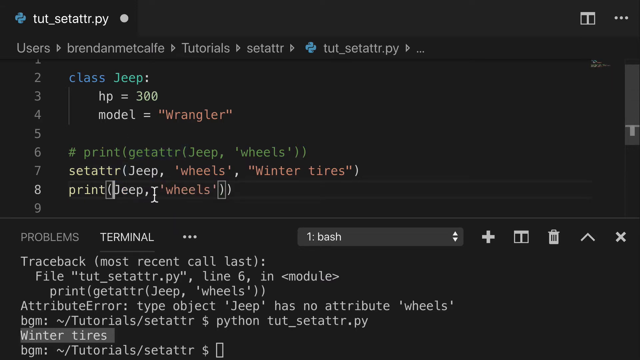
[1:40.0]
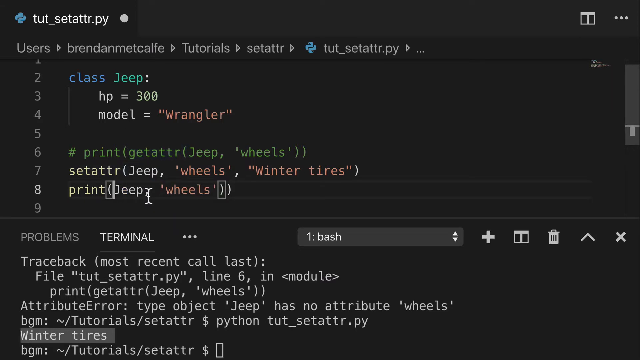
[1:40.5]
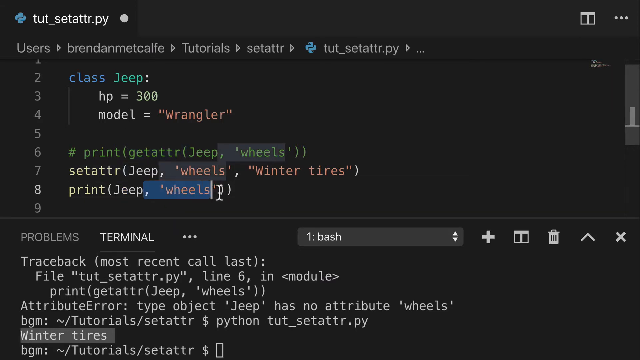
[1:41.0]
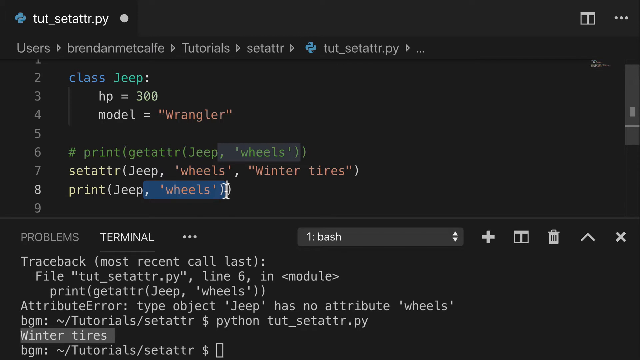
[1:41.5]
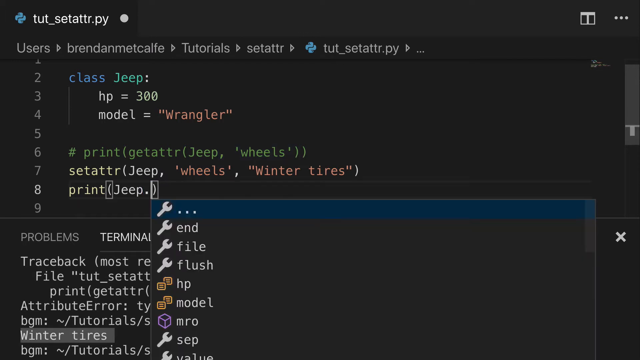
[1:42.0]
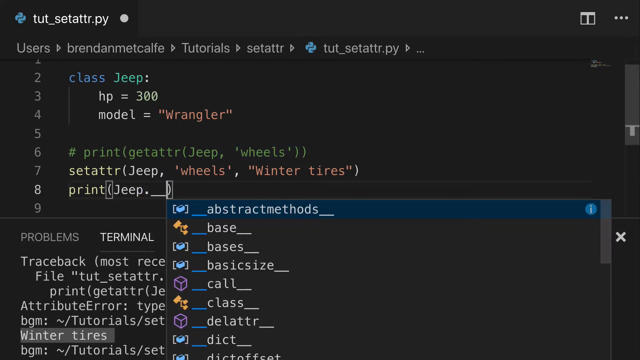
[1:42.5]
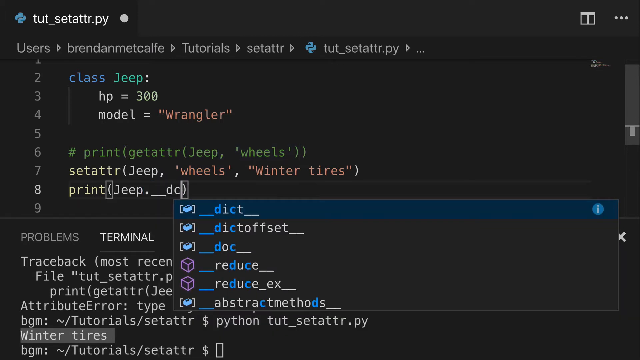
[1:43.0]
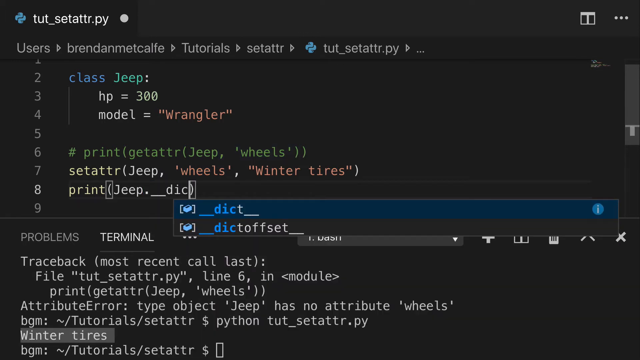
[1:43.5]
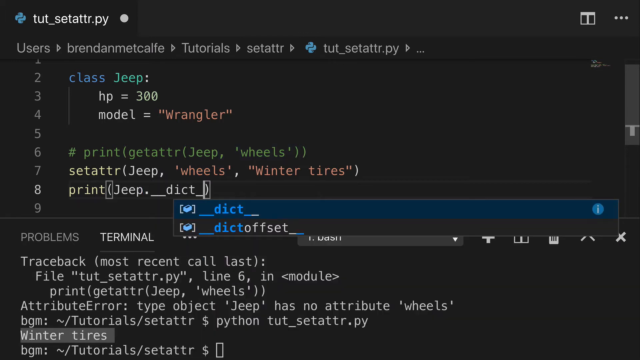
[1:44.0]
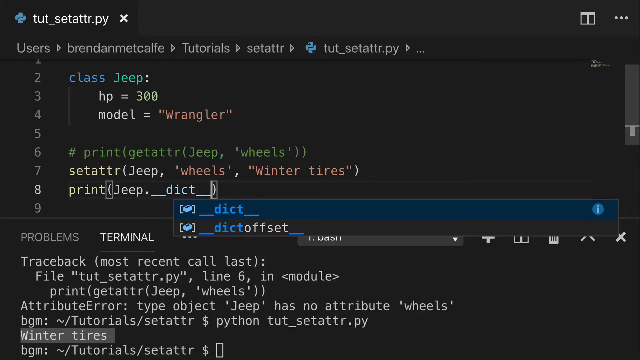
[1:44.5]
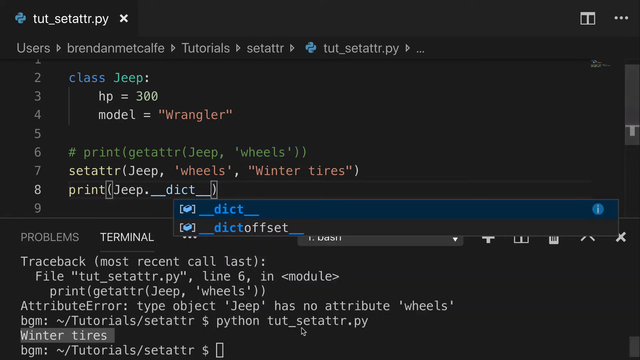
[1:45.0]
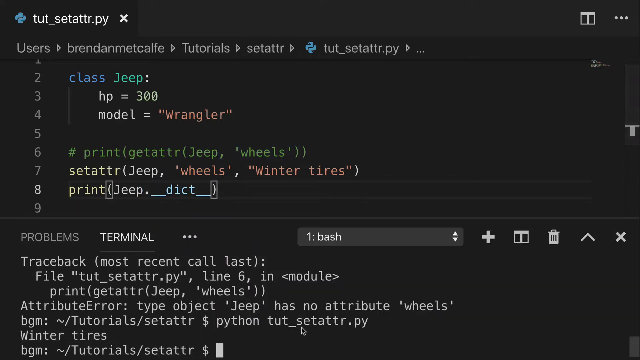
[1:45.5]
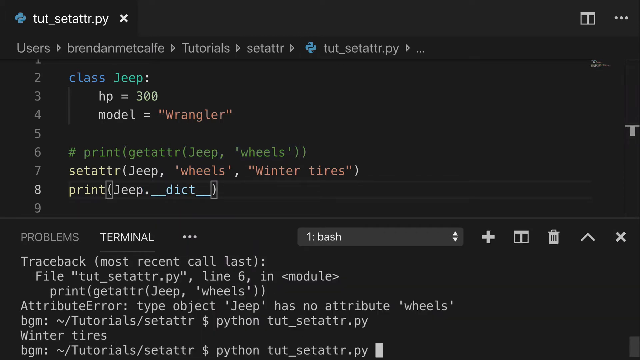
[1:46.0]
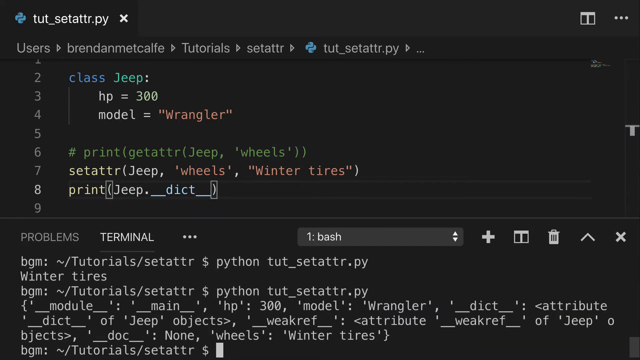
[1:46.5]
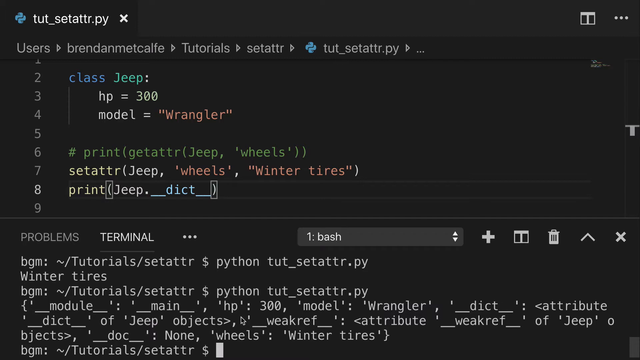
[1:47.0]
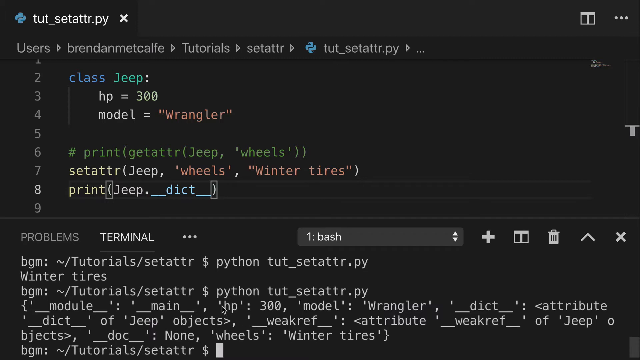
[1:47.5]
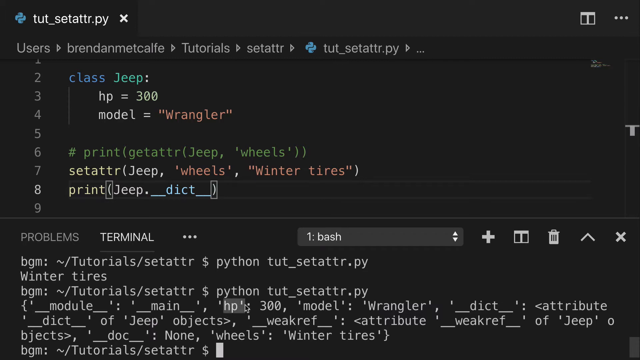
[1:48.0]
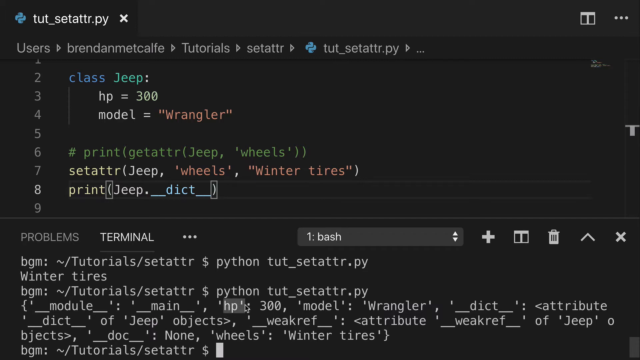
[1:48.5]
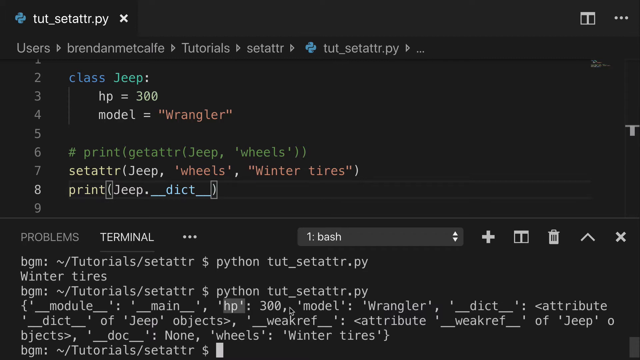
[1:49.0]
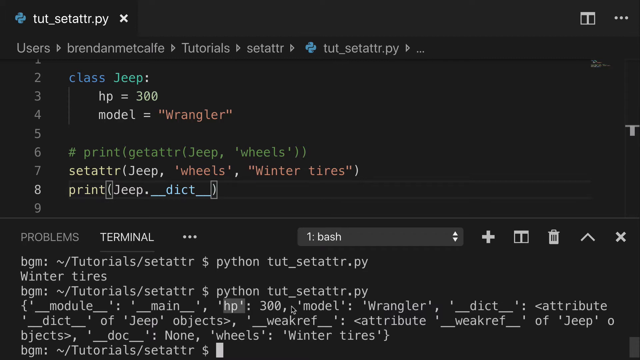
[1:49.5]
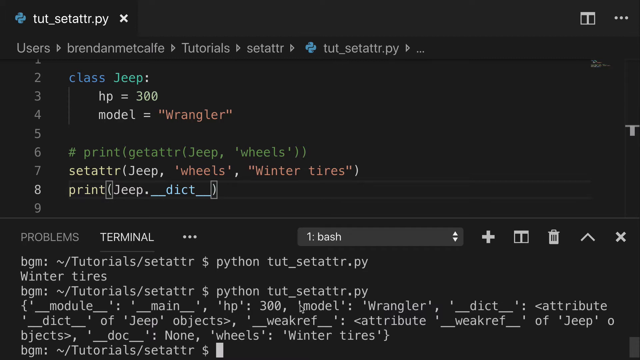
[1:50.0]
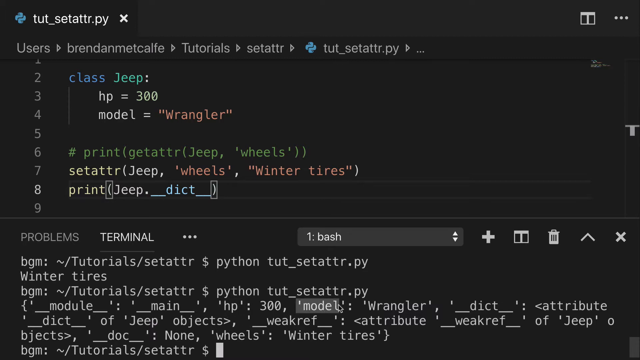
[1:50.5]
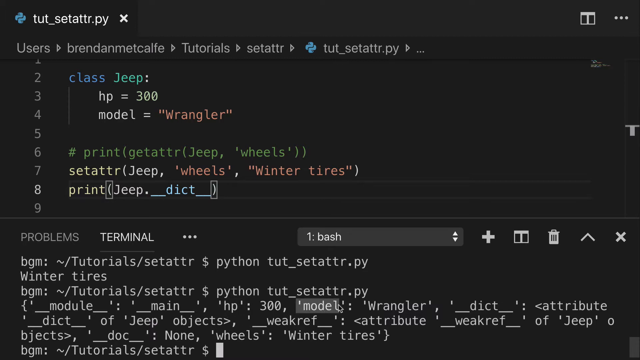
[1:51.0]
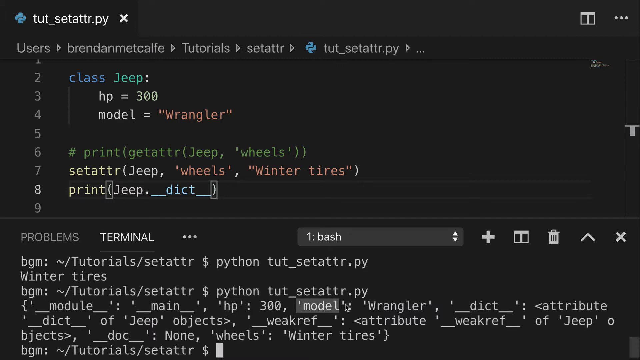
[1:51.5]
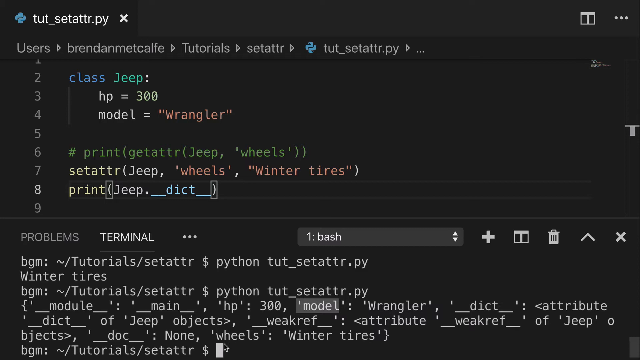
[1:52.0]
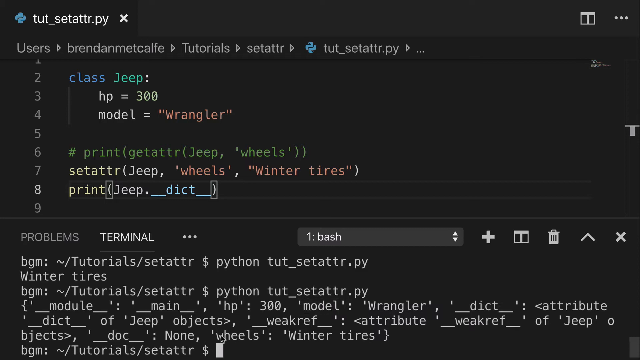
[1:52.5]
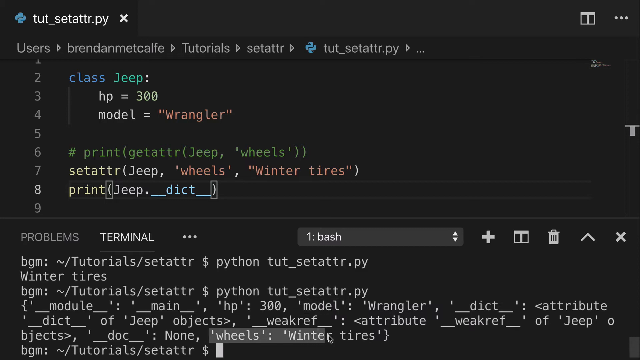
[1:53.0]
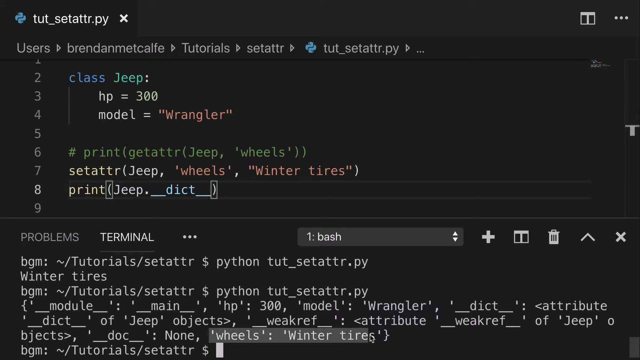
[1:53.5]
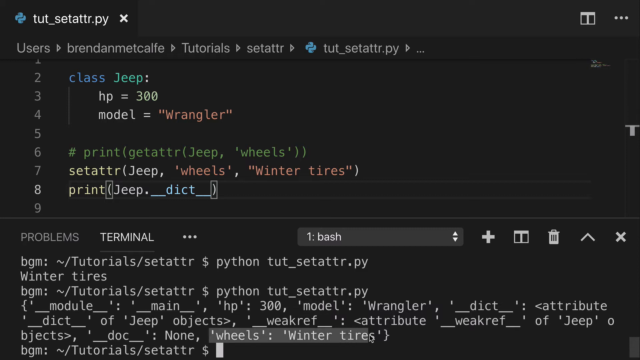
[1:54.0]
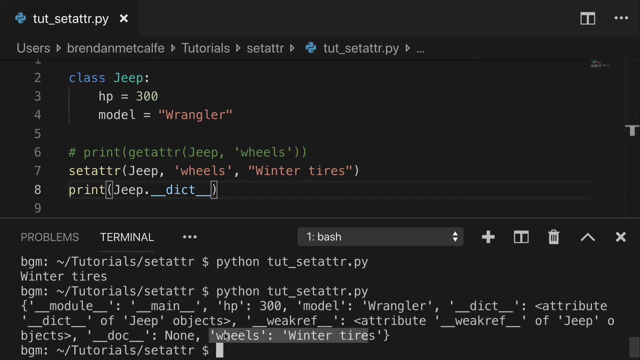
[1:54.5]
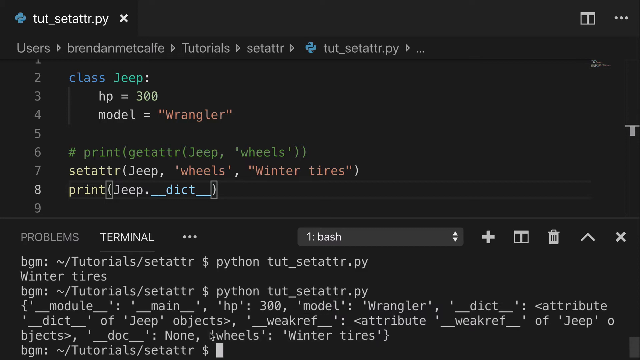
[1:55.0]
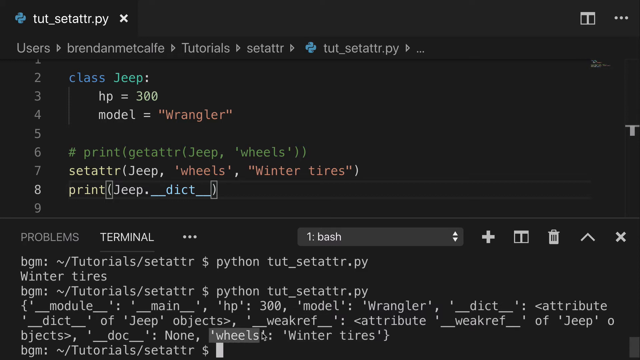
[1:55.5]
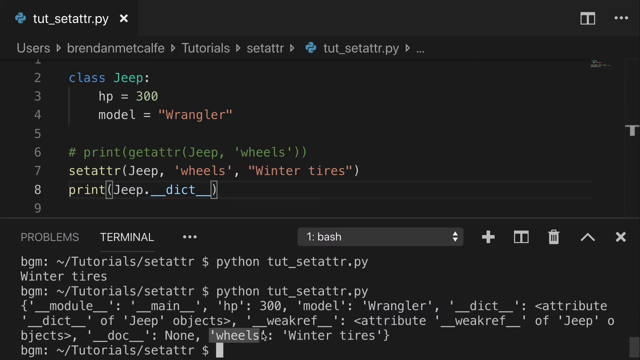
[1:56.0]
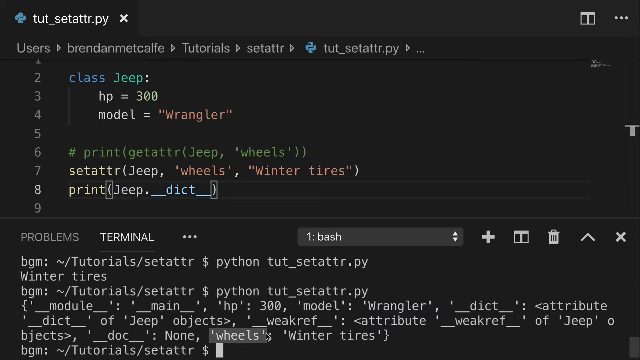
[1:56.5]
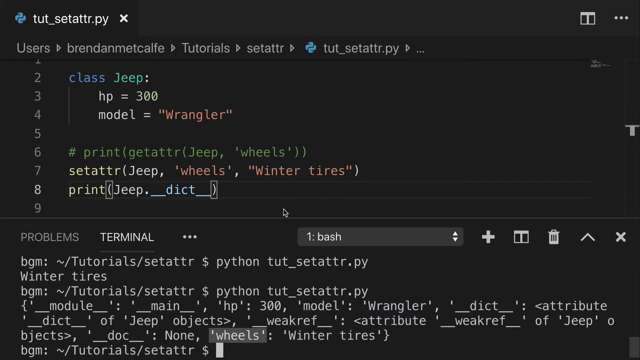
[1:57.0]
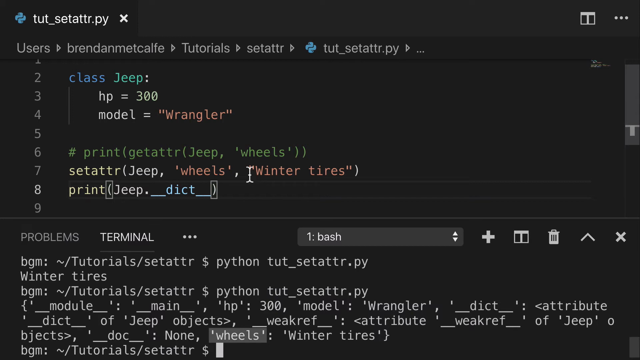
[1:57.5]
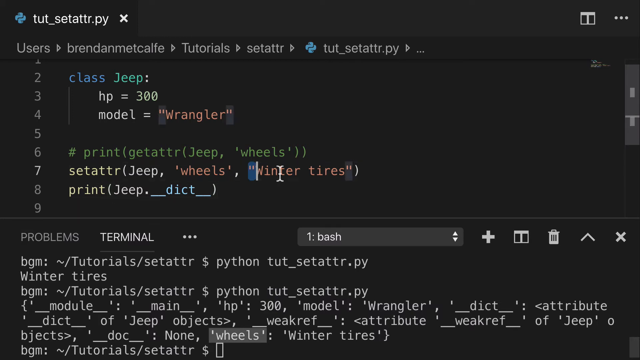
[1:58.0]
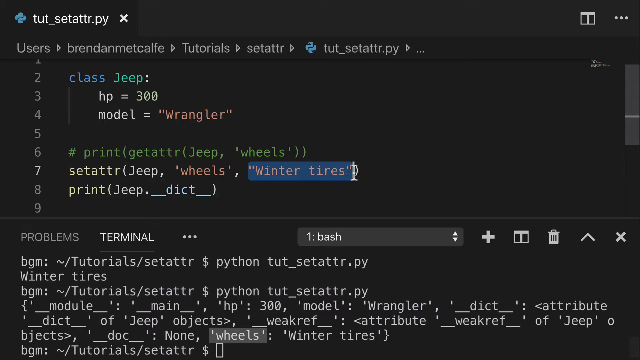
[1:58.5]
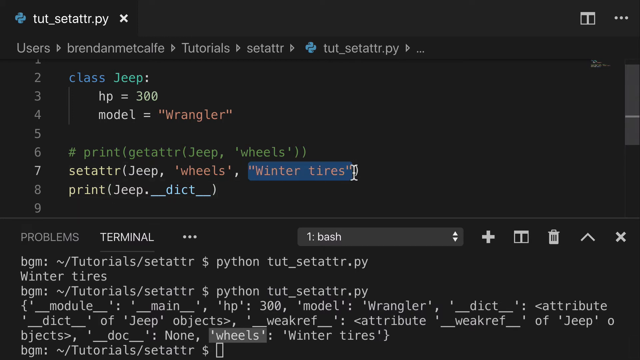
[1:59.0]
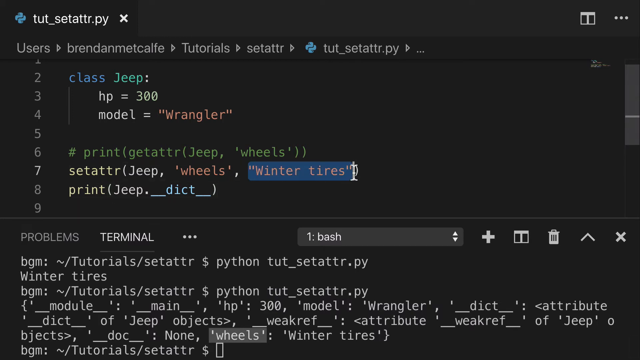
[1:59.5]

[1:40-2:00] A screen shows a blue logo on the left and a file name ending in "_setattr.py." There is a white circle, and to the right are a book and three dots. Underneath is a path reading "user," "Brendan Metcalf," "tutorials," "setattr," then the blue logo and "_setattr.py," with forward arrows between the parts, followed by three dots. Line two reads "class" in blue and "Jeep" in green. Line three reads "HP = 300" in green. Line four reads "model = Wrangler" in red. Line five is blank. Line six, in green, reads "# print getattr Jeep wheels." On line seven, "setattr" is in yellow, "Jeep" is in white, and "wheels winter tires" is in red. Line eight reads "print Jeep" with "wheels" in red. Line nine shows nothing. Line eight is then changed to read "Jeep._DICT_," which changes things at the bottom.